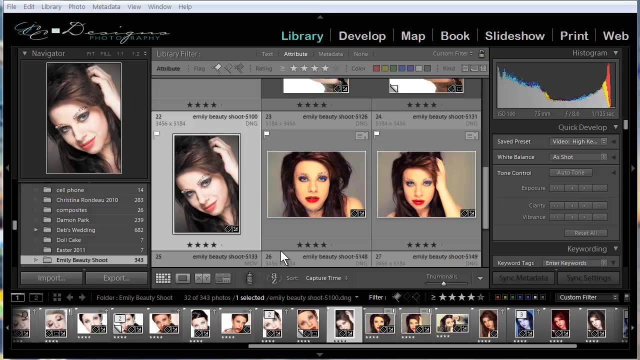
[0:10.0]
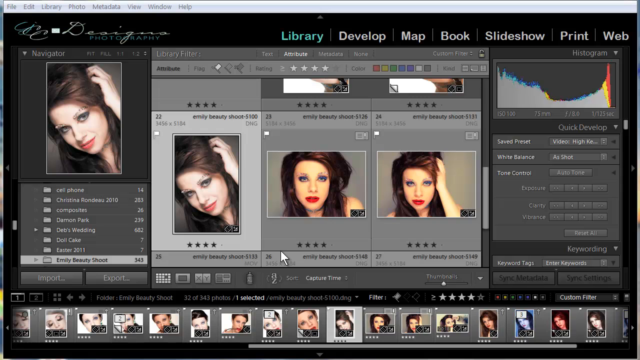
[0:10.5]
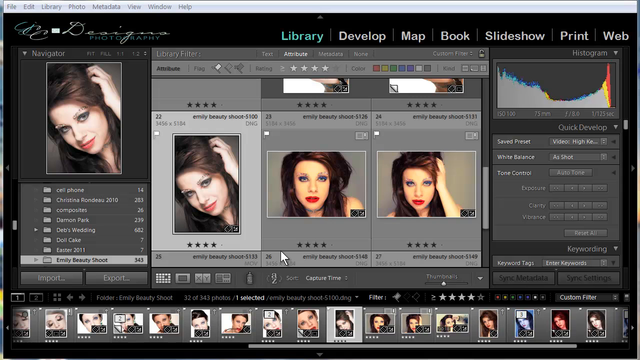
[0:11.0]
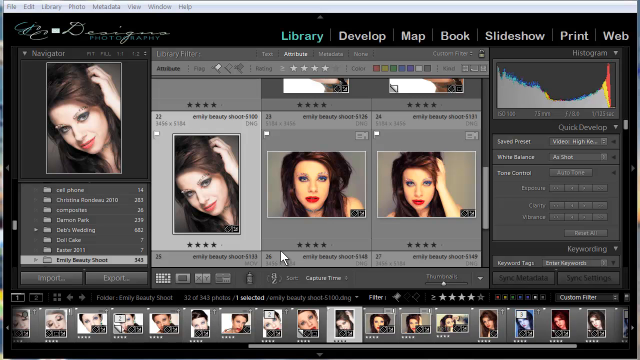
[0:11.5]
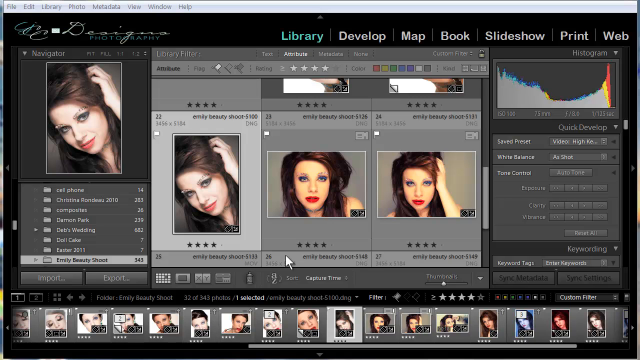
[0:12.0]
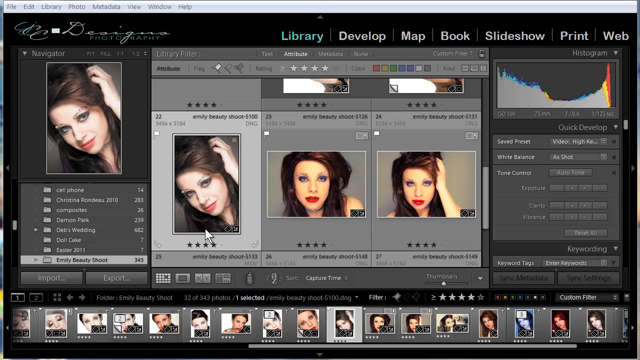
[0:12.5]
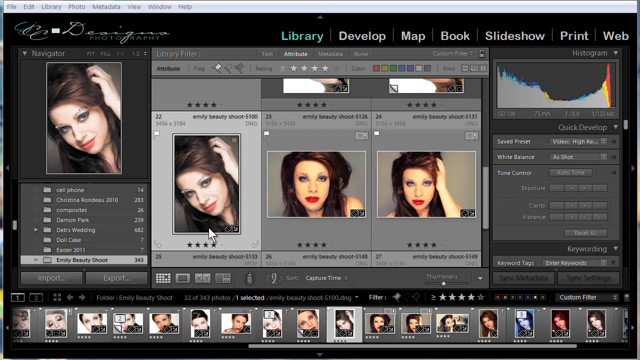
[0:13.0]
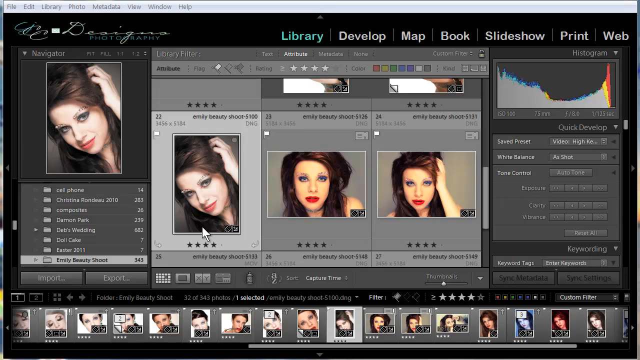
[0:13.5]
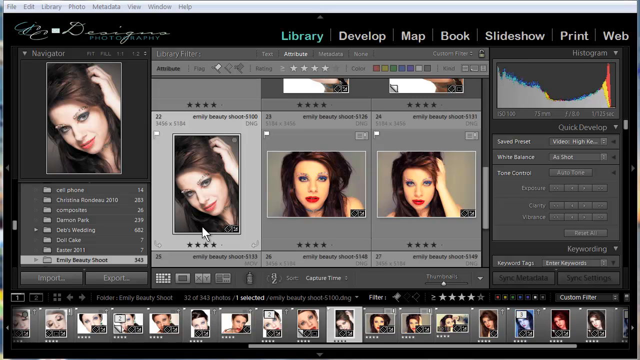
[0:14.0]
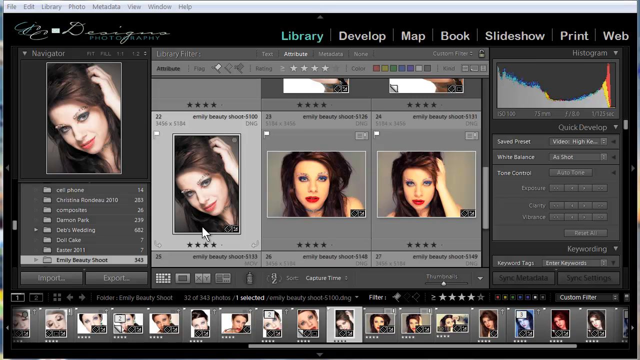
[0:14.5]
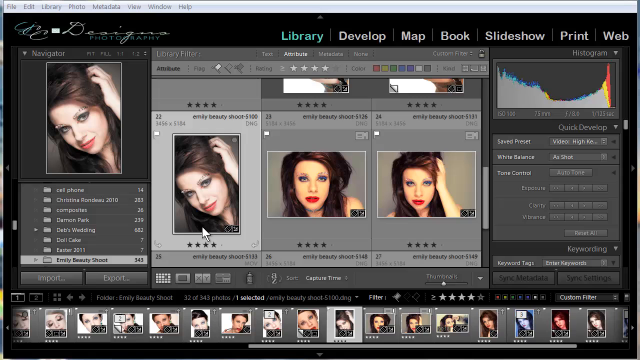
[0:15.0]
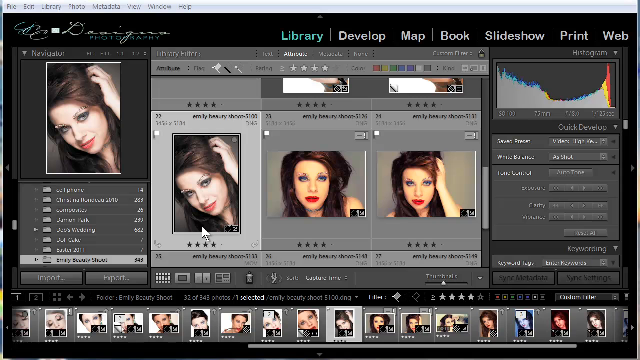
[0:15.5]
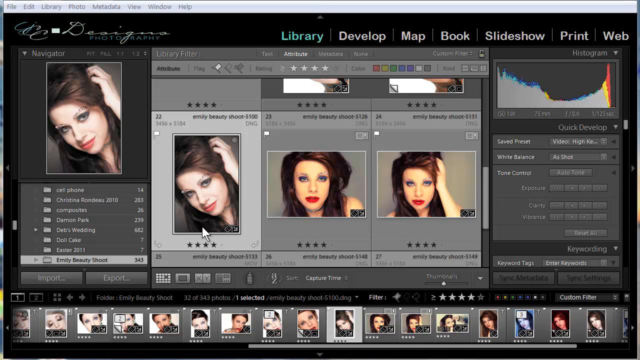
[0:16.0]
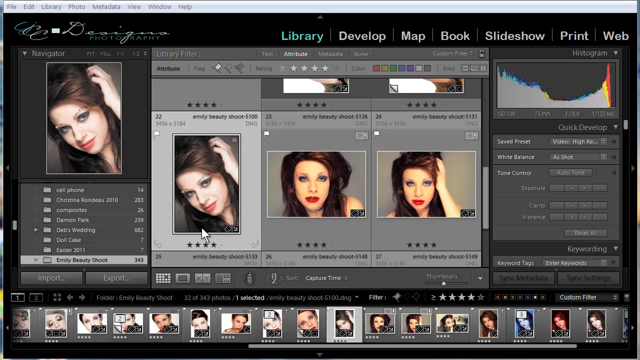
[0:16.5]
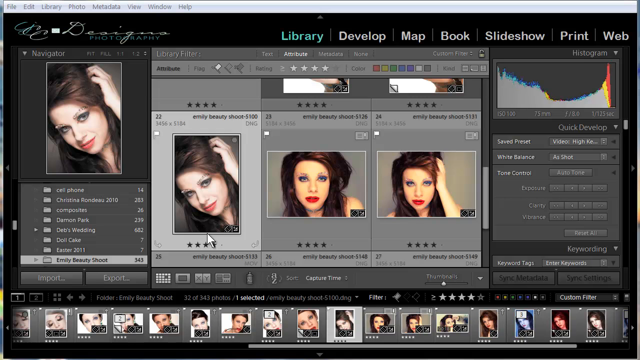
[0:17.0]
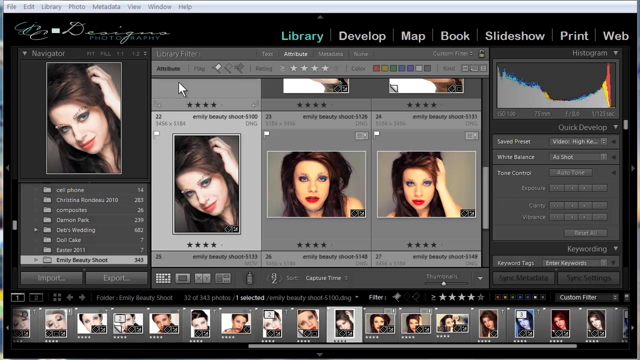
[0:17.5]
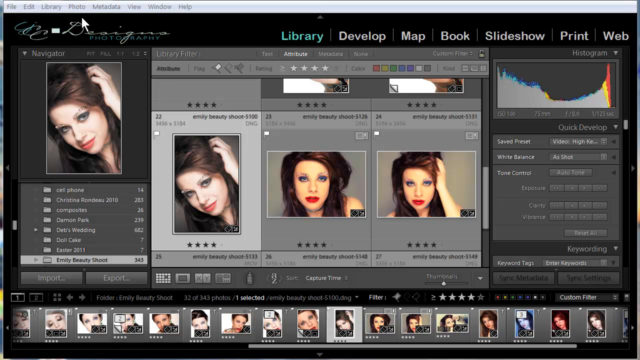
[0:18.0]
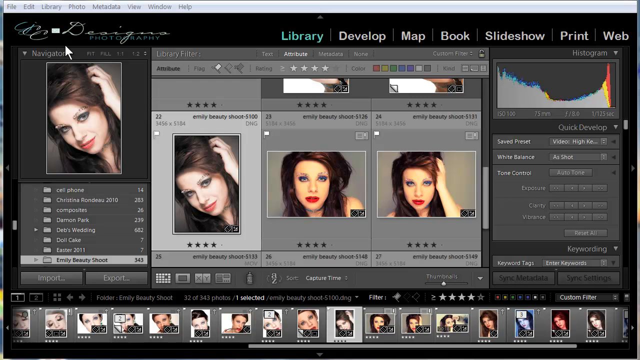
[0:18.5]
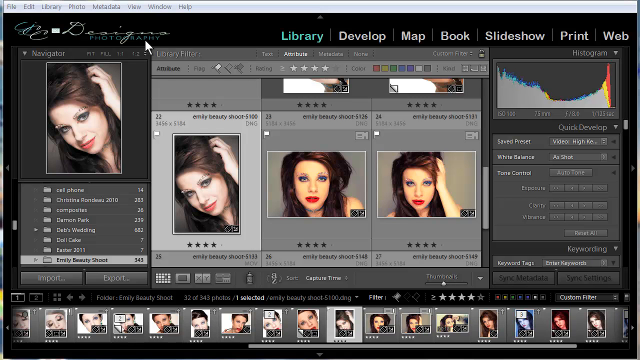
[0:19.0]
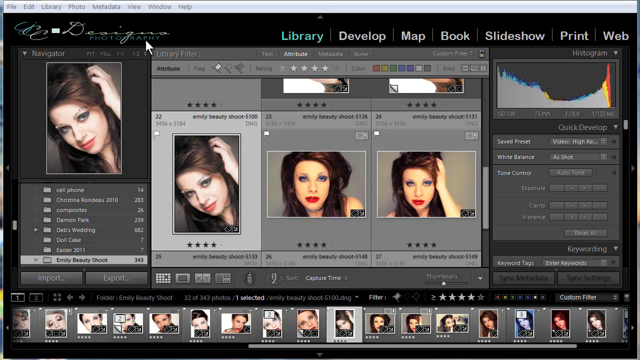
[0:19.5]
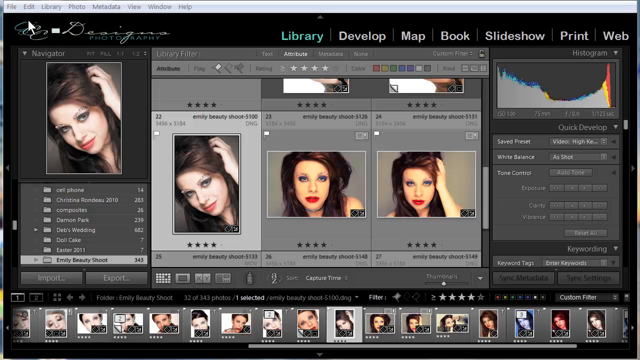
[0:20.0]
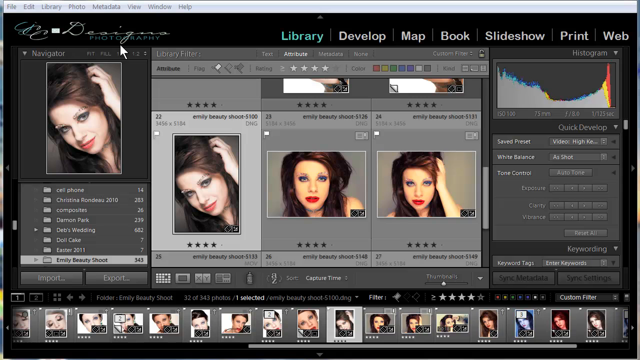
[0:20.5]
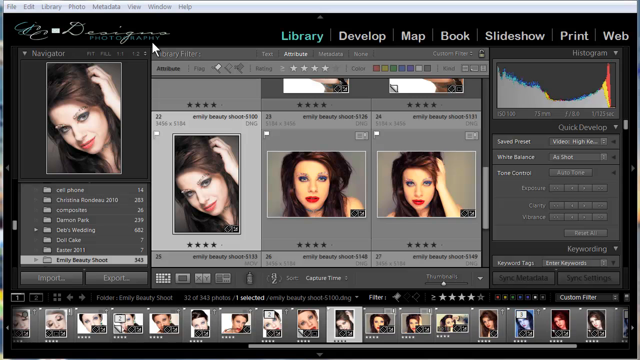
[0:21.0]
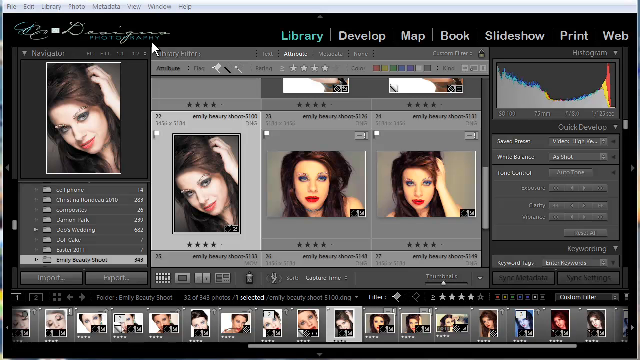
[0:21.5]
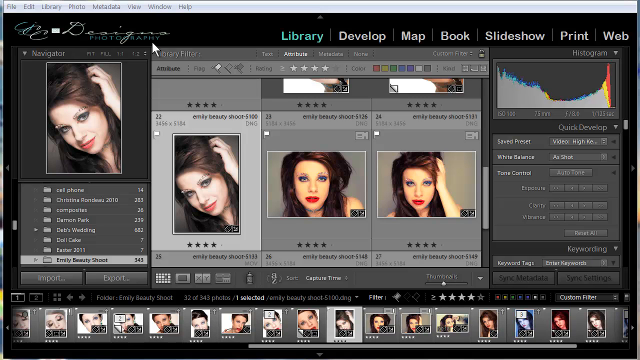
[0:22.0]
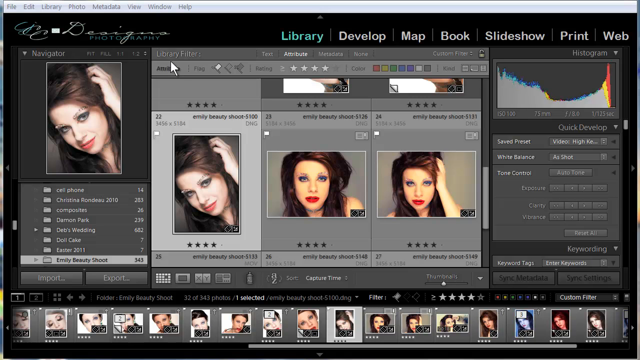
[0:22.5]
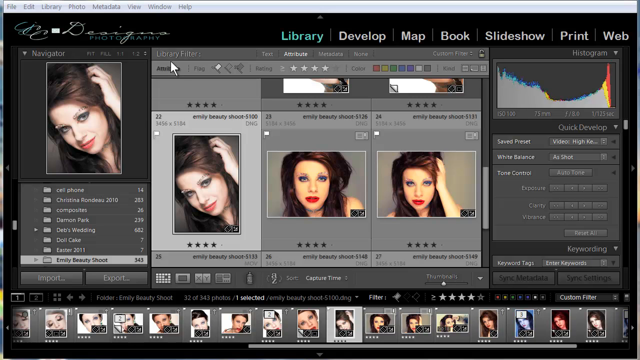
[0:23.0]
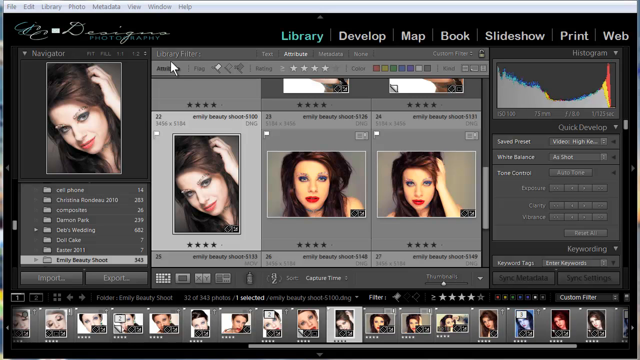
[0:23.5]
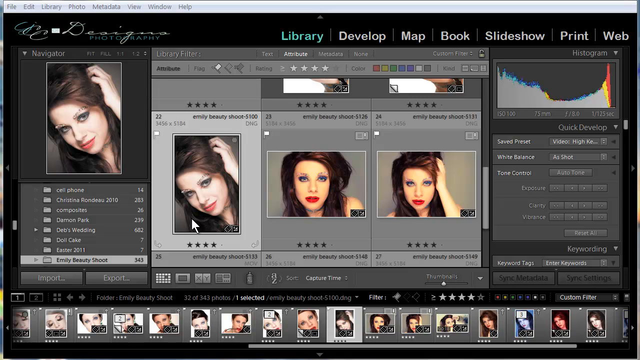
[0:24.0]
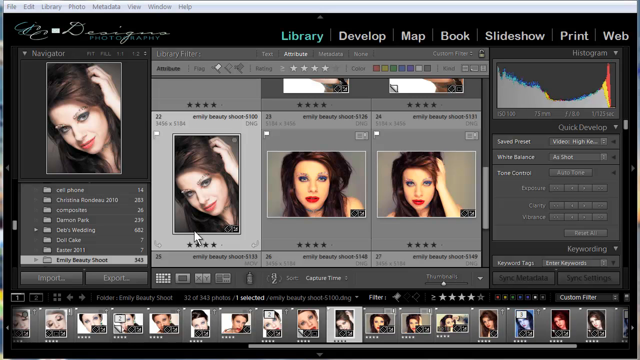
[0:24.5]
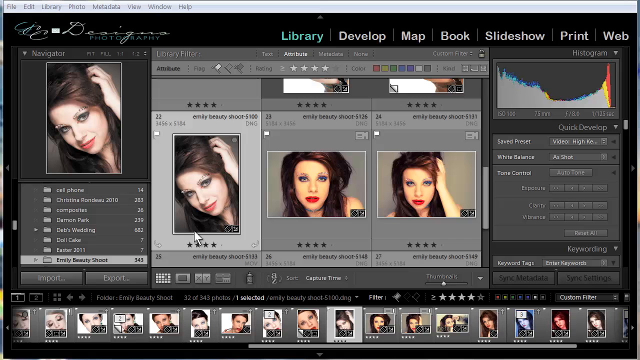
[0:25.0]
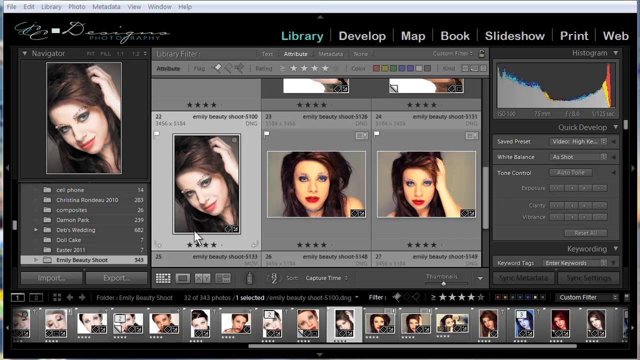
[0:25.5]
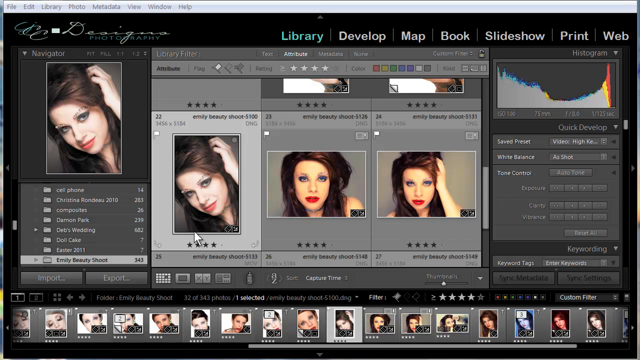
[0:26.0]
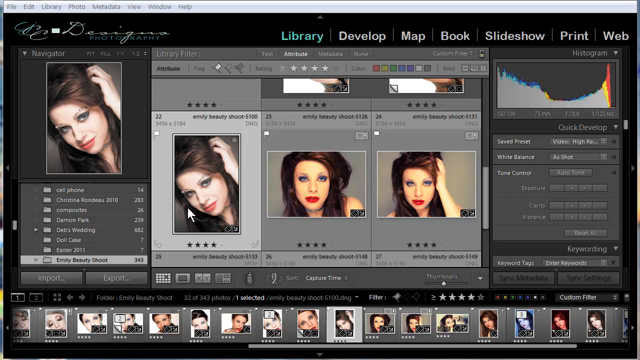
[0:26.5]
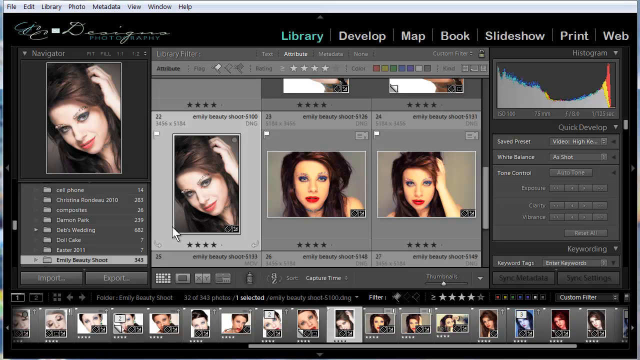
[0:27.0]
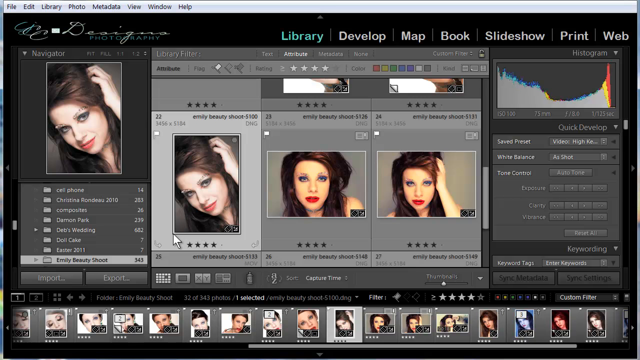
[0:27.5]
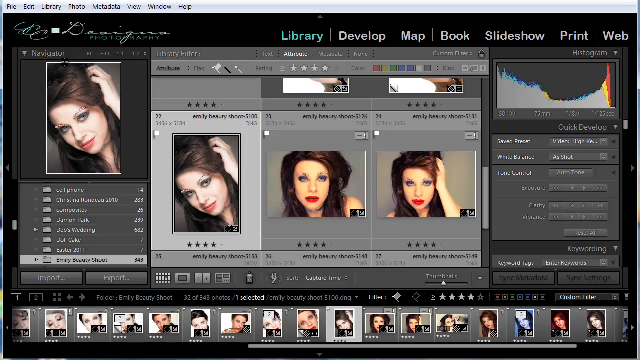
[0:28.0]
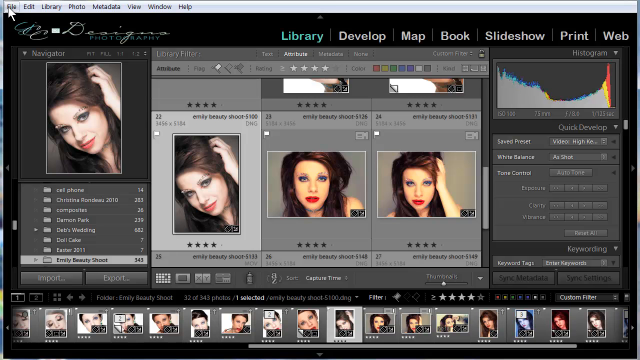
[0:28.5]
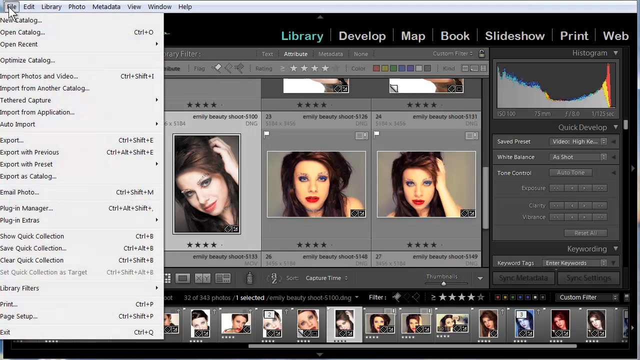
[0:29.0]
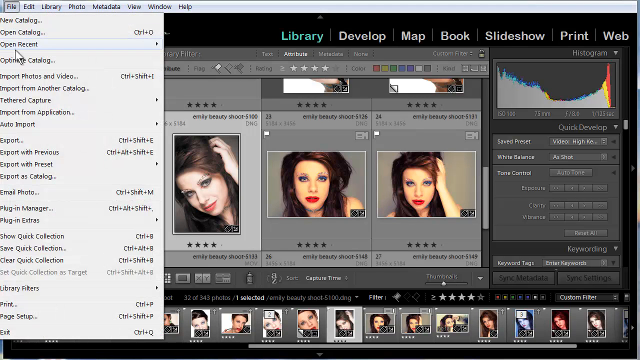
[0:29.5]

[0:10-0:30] In the photo editing software, a white mouse cursor that looks like a triangle with an arrow coming out of it pans over one of the woman's photos. The images show a model in different poses, and each has stars below it, which looks like some sort of rating system. The cursor moves around the application name at the top, then over the library filter setting. It looks as if it is going to click on the model, but it keeps panning around, then goes to the menus at the top (file, edit, library, photo, metadata, view, window, help) and clicks into file. It then returns to the woman's face. The woman has brunette hair.